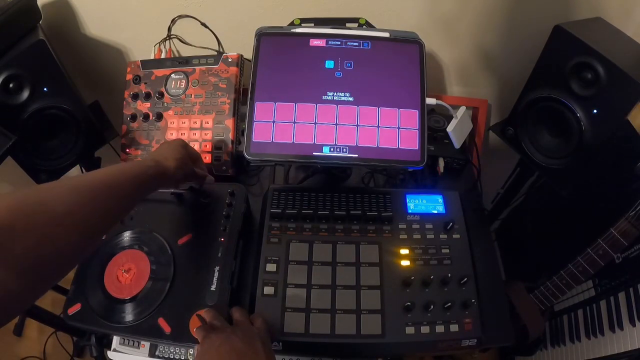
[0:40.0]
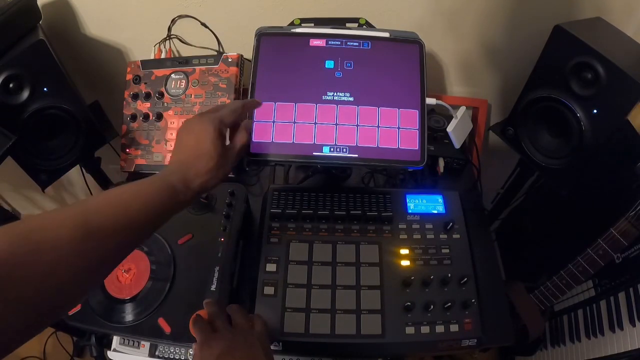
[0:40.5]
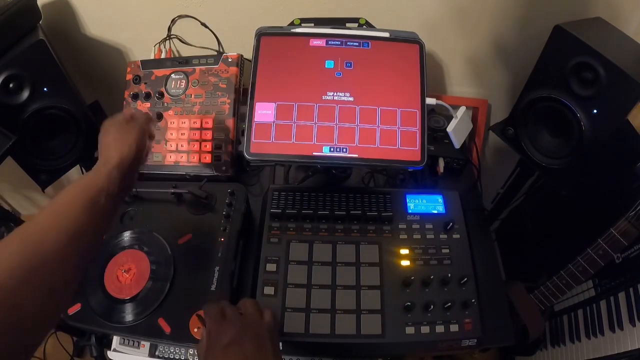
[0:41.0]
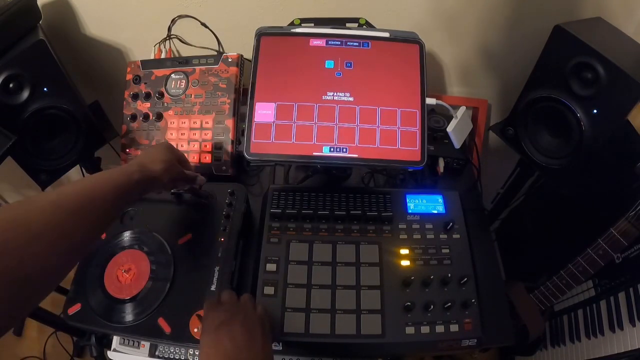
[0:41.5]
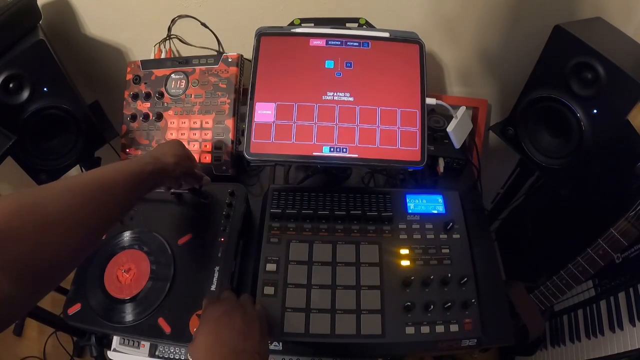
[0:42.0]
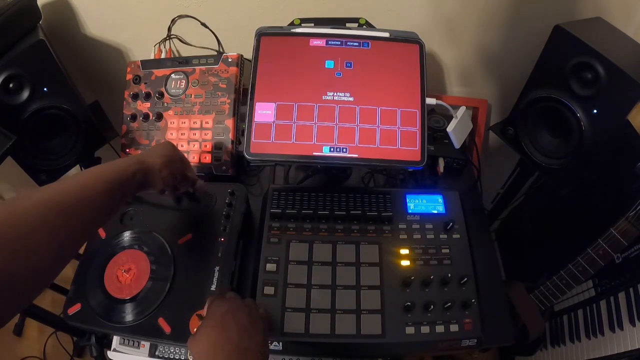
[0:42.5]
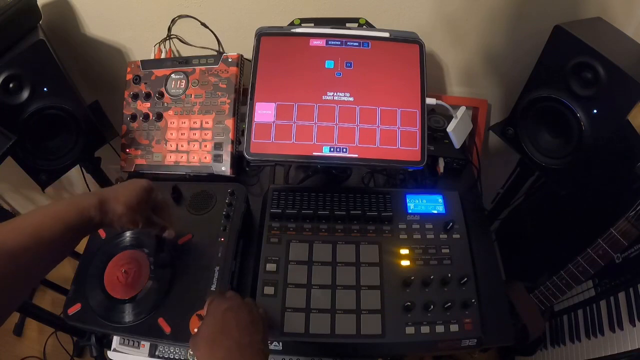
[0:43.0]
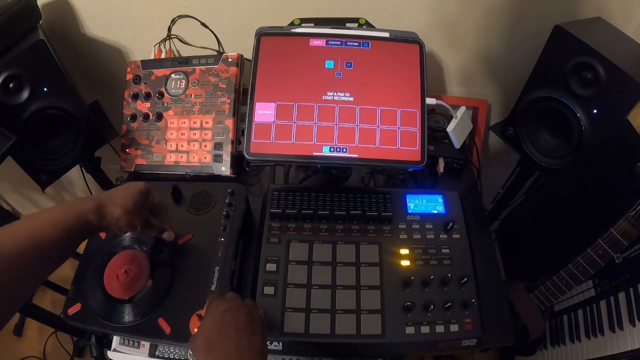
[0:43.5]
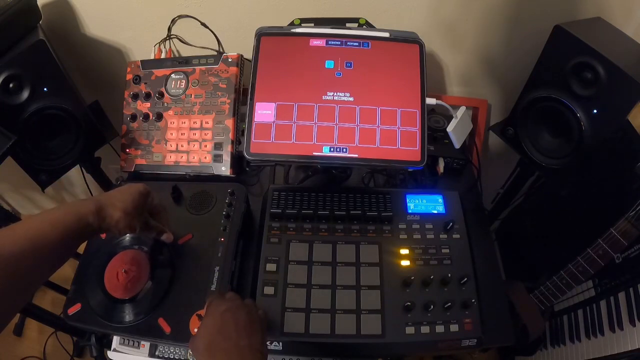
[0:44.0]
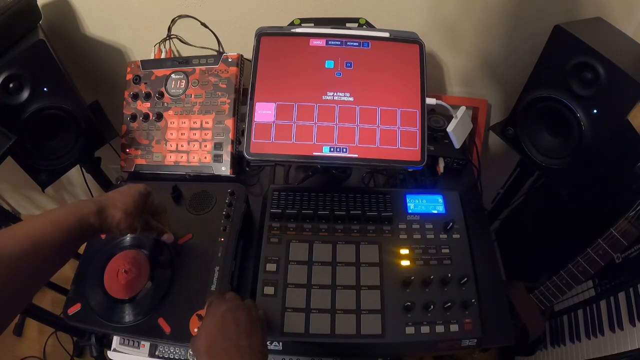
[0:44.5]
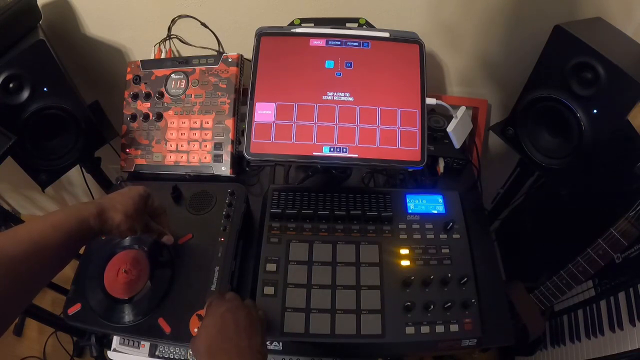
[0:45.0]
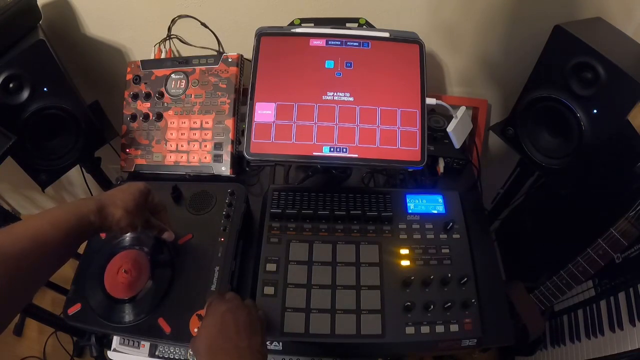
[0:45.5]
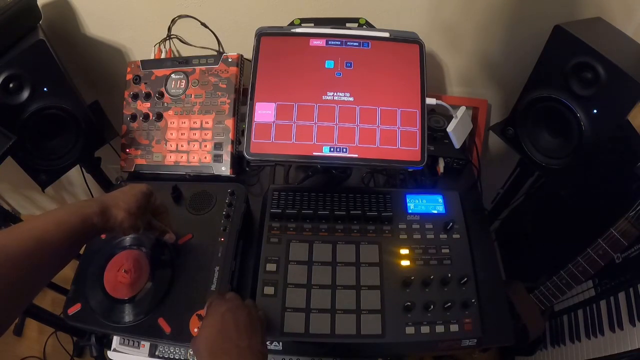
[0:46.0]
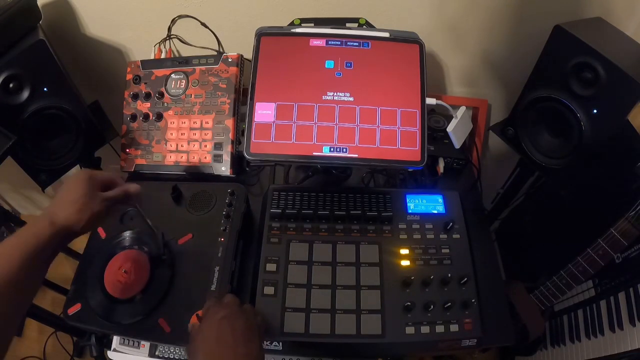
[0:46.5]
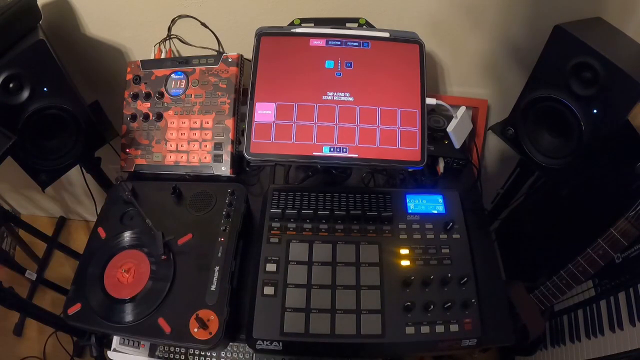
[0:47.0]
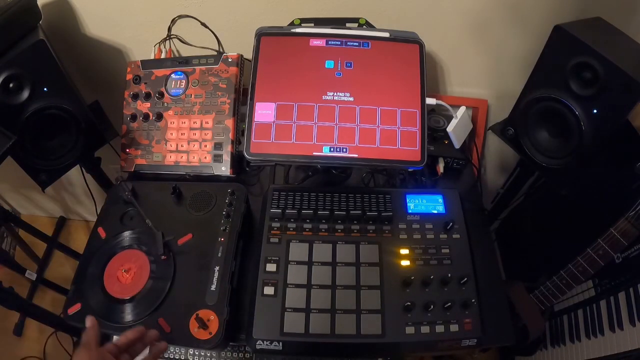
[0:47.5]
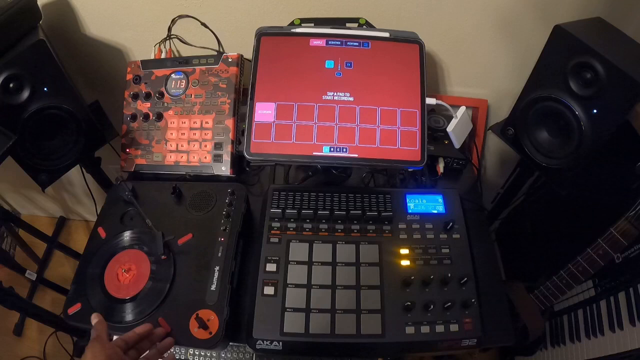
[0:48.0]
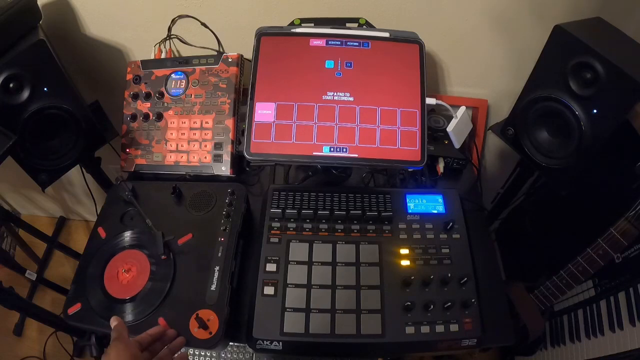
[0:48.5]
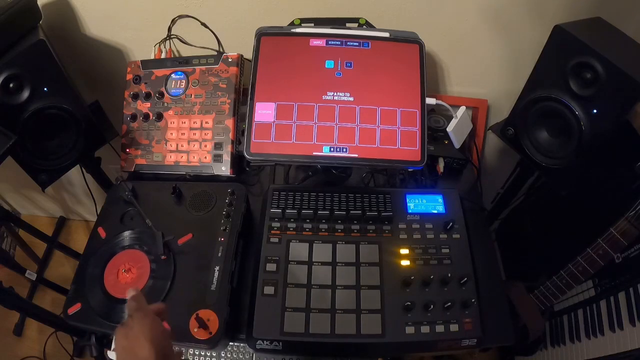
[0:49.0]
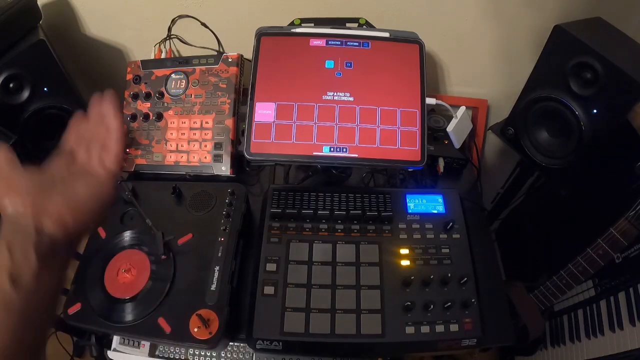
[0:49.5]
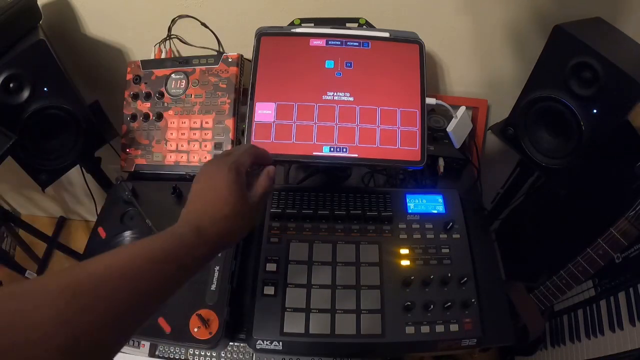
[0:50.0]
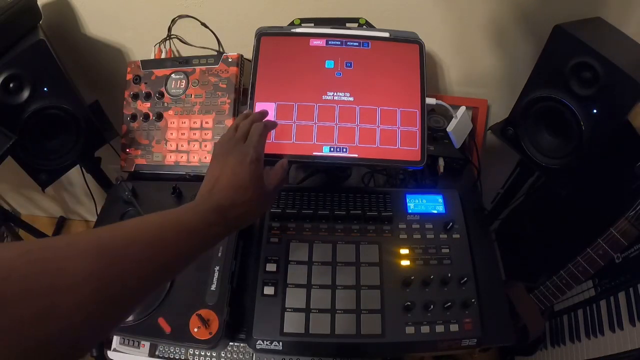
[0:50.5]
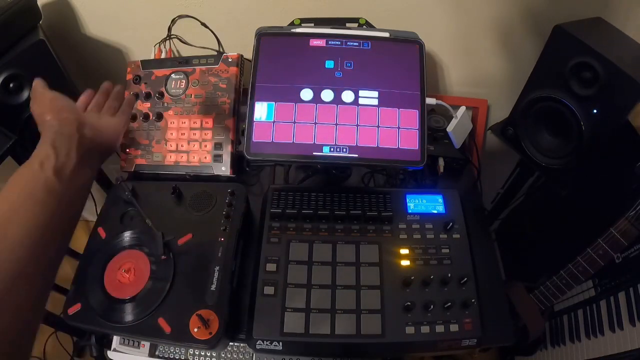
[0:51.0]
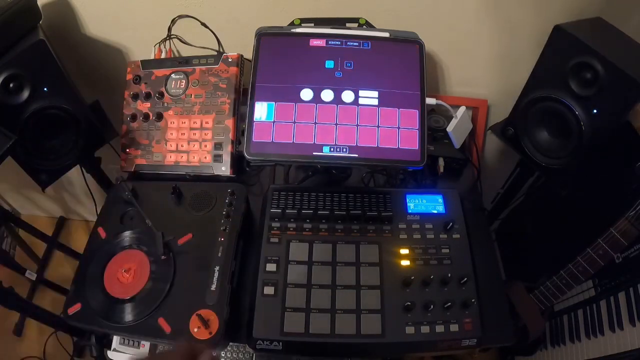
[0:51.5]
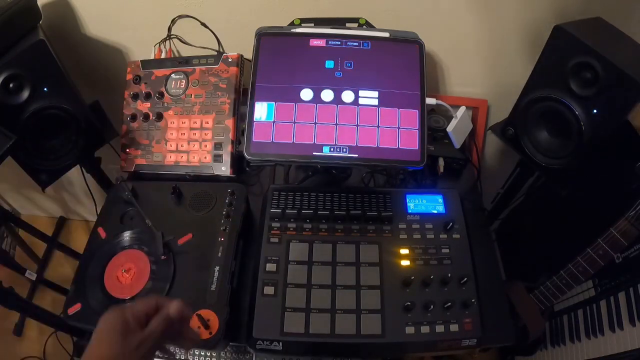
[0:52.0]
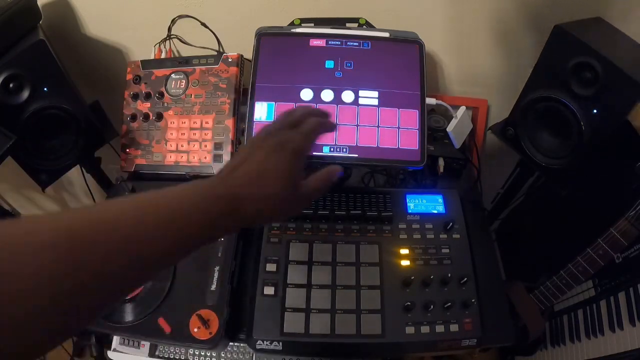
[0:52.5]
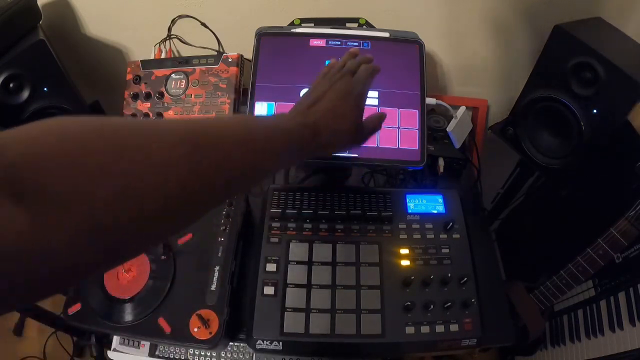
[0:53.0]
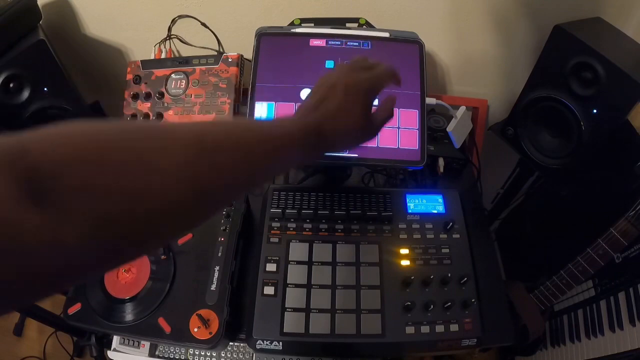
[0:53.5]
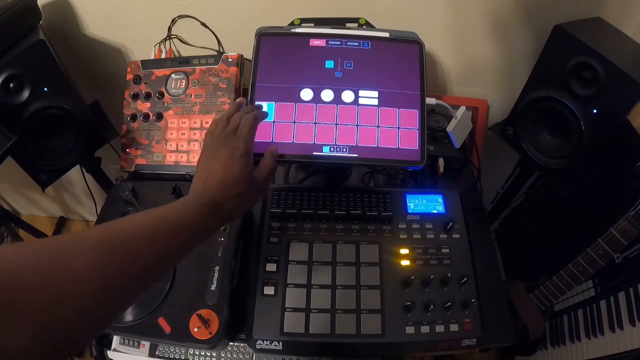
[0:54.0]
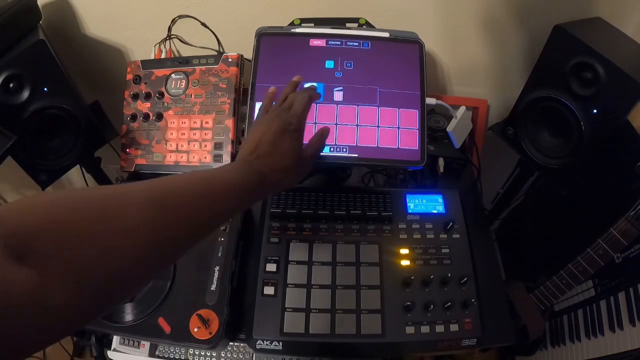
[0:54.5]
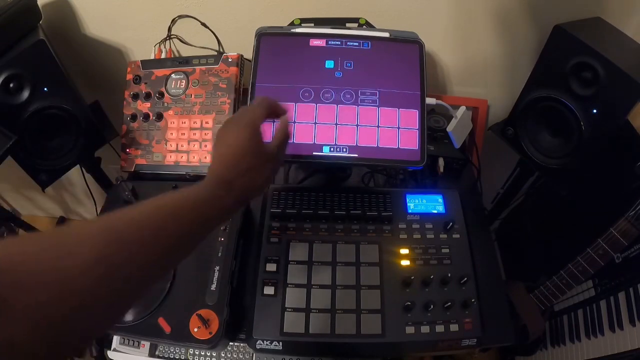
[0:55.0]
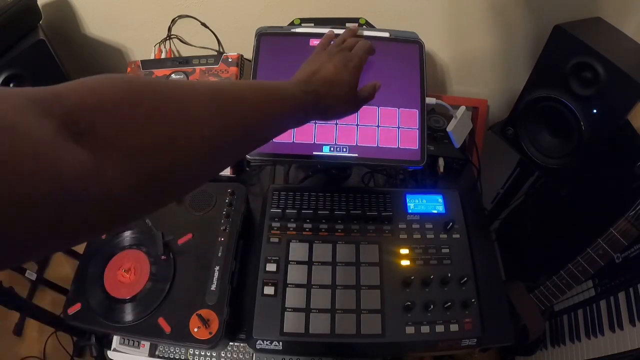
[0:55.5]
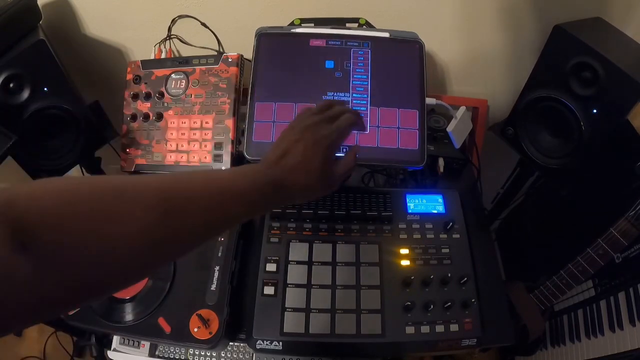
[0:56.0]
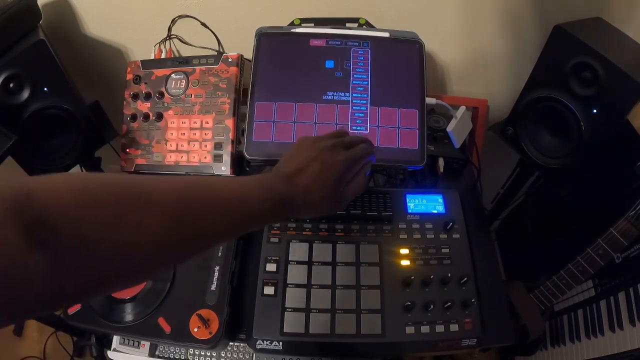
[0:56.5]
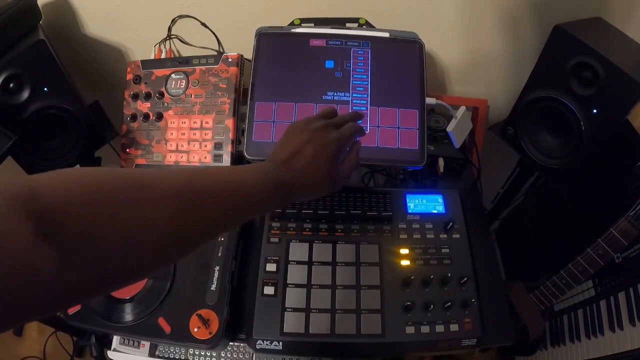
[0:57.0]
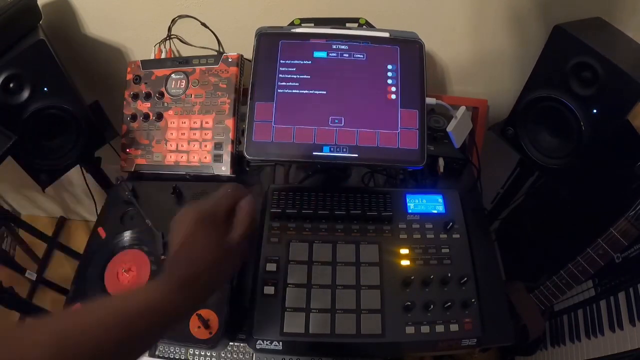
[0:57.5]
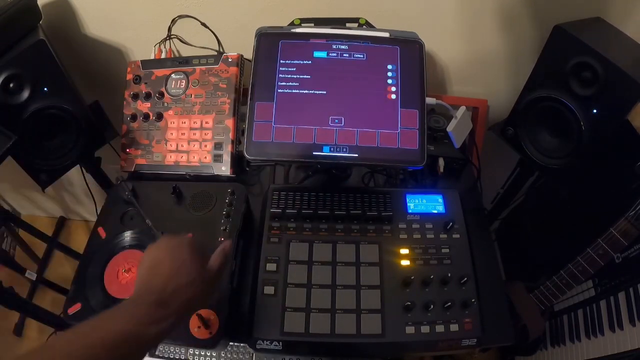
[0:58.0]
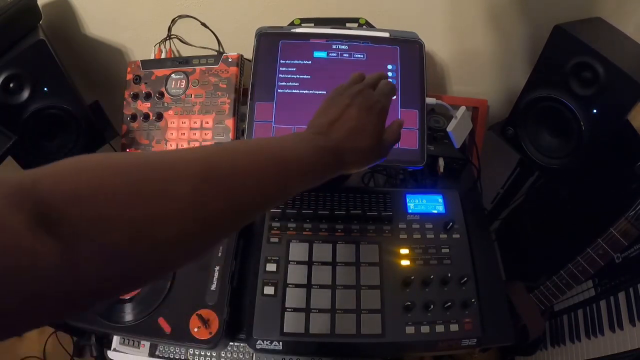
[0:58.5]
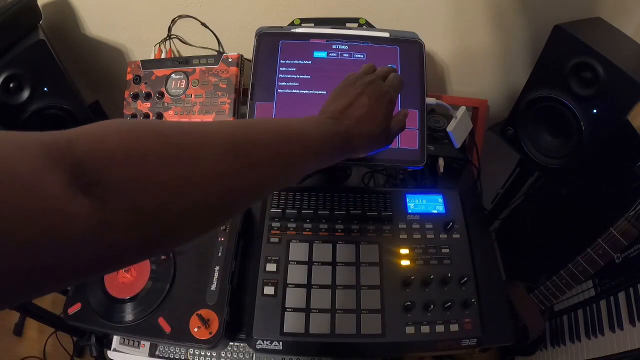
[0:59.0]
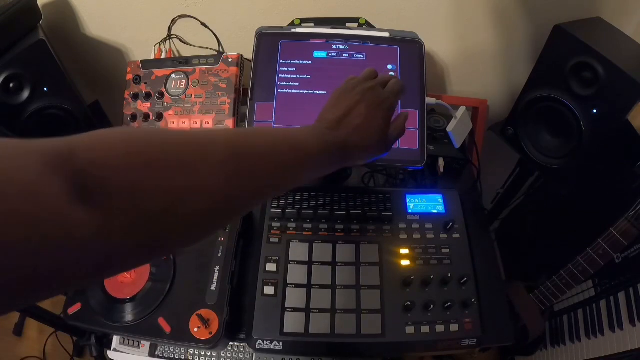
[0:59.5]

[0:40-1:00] The person reaches down, grabs the arm of the vinyl record player and moves it over onto the vinyl record, which is spinning clockwise, placing the arm on the record. They first press a button over to the left, then pick up the arm, move it over and set it down onto the record. They then use their left hand to select buttons on the lit-up touchscreen equipment in the center of the other equipment, a digital readout keyboard on the piece of equipment above everything, manipulating the different touchscreen buttons with a finger.